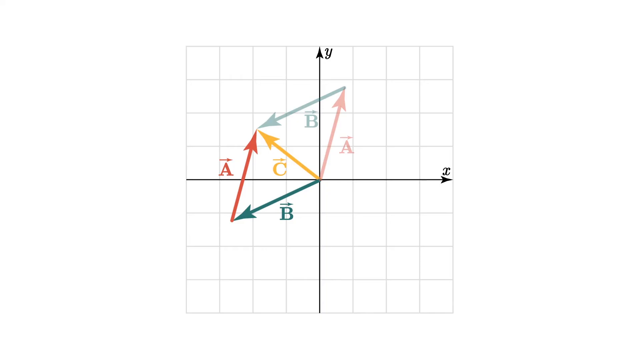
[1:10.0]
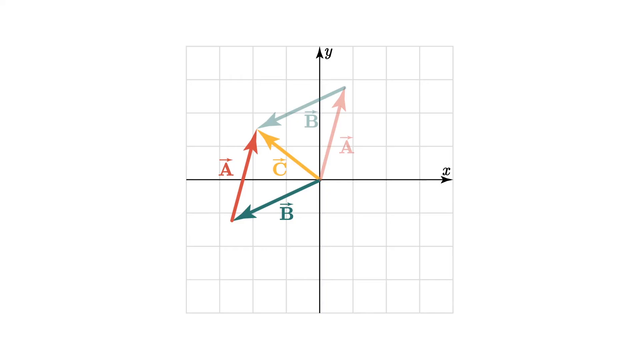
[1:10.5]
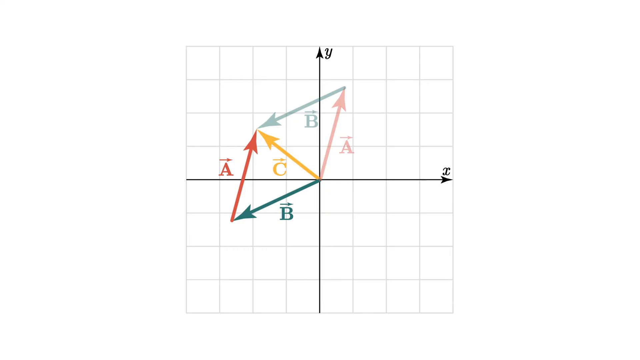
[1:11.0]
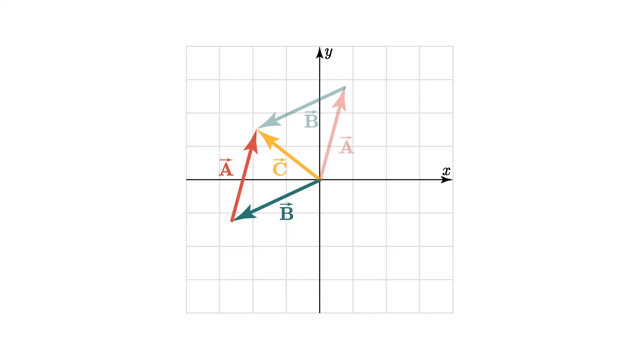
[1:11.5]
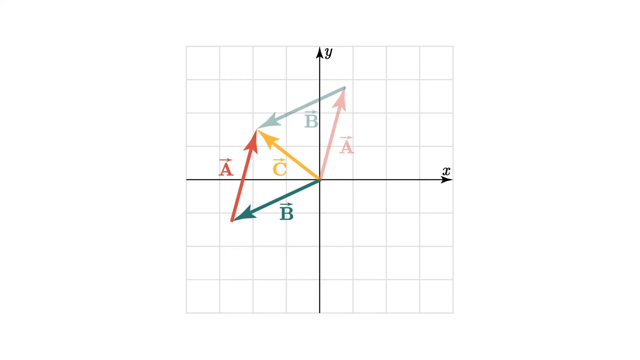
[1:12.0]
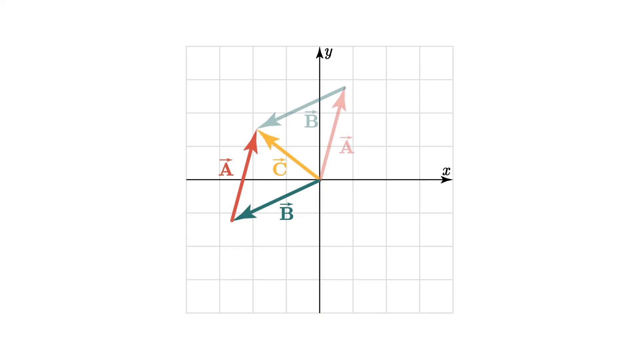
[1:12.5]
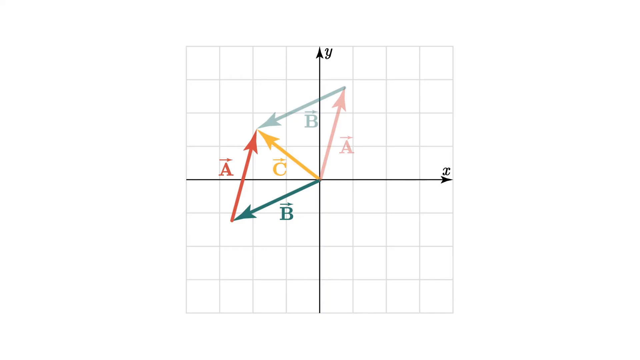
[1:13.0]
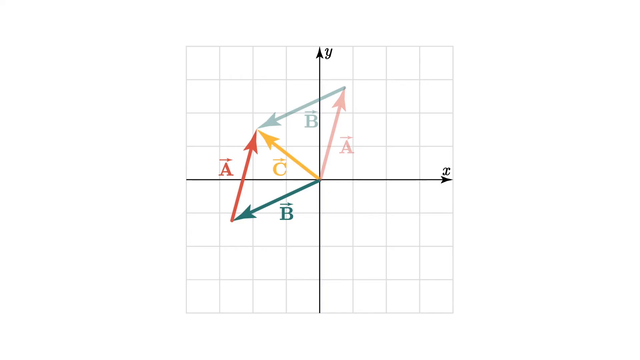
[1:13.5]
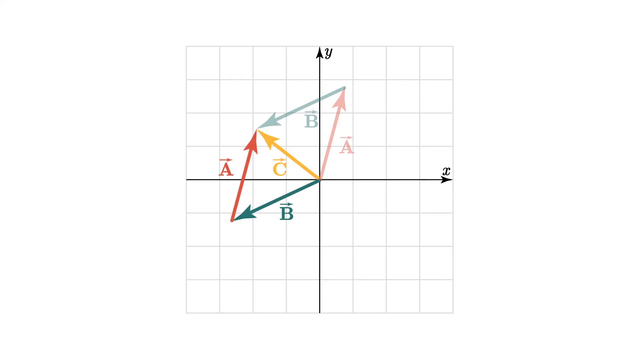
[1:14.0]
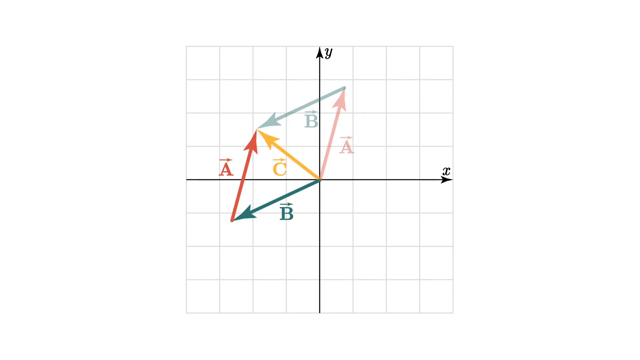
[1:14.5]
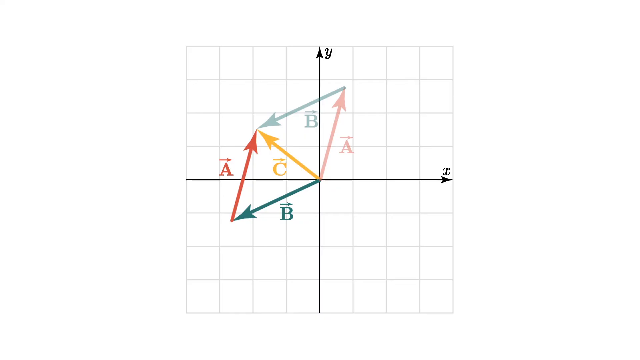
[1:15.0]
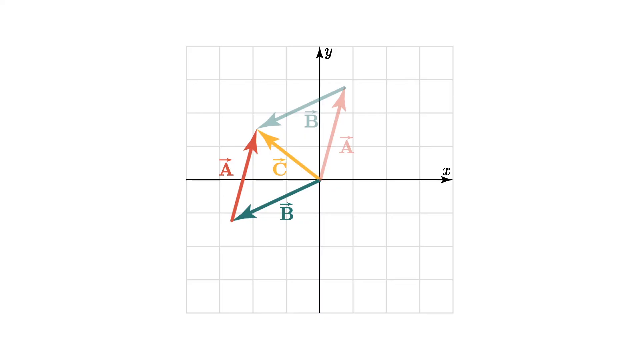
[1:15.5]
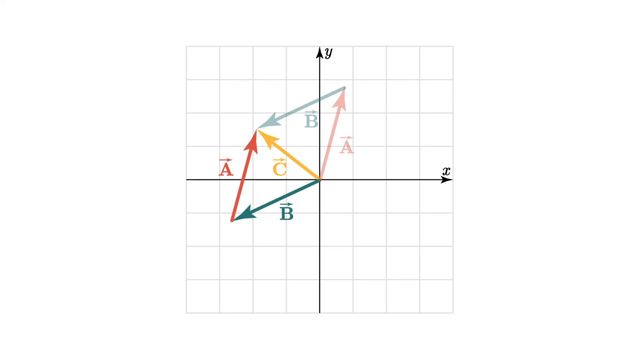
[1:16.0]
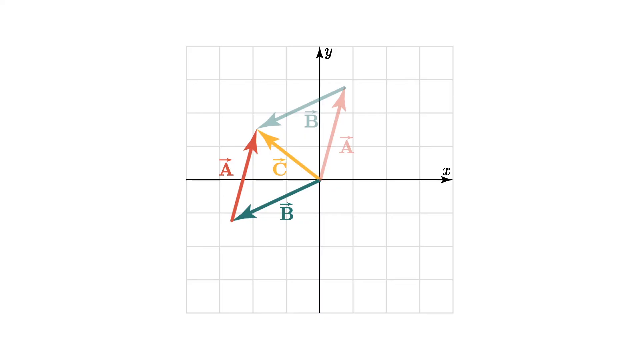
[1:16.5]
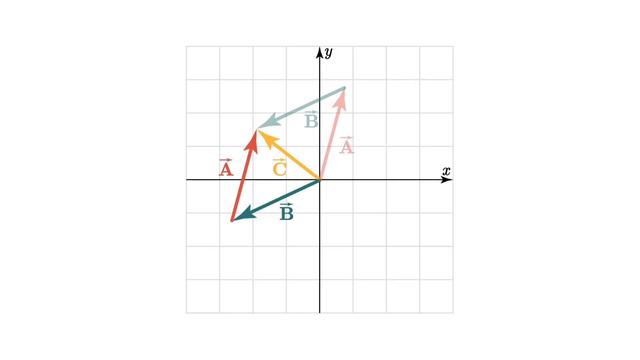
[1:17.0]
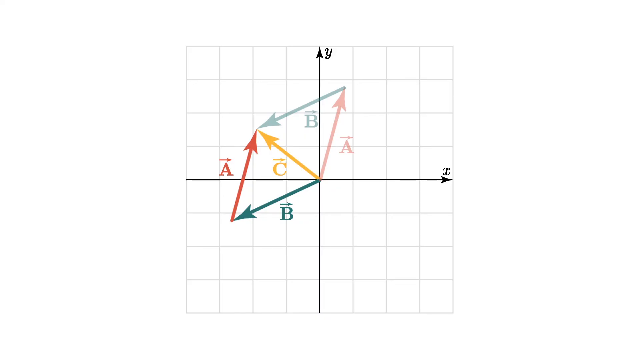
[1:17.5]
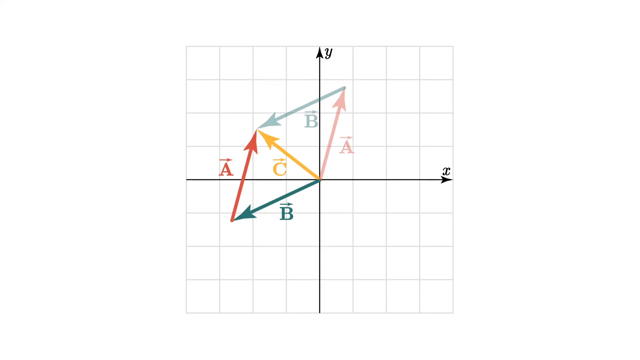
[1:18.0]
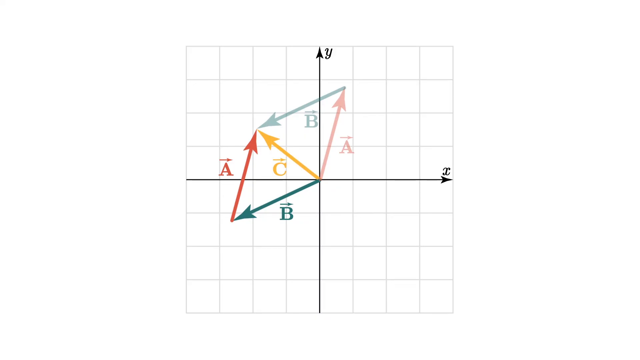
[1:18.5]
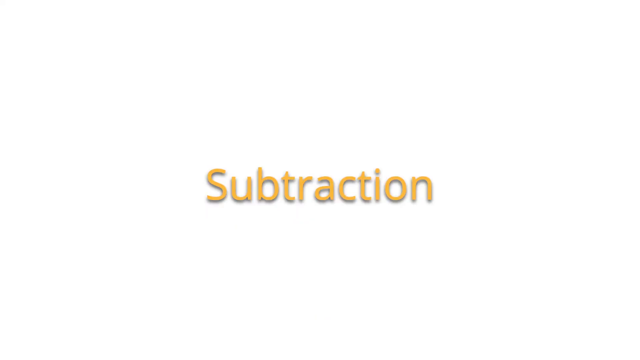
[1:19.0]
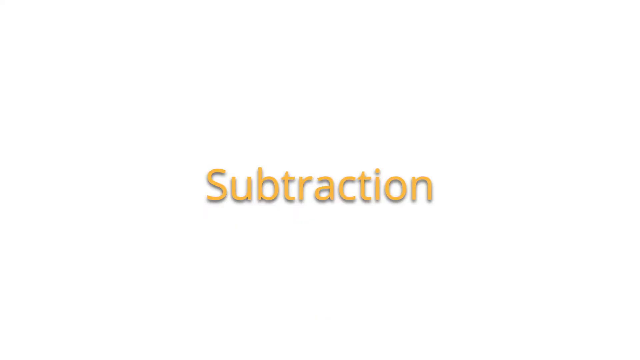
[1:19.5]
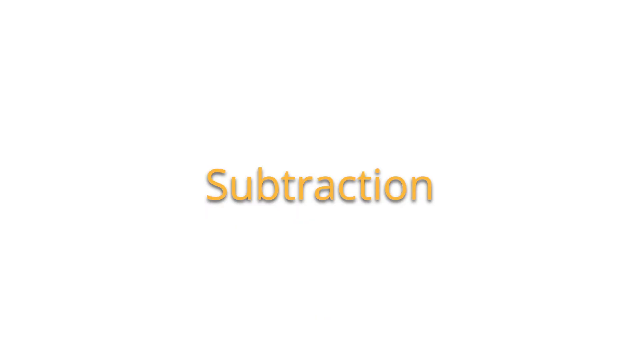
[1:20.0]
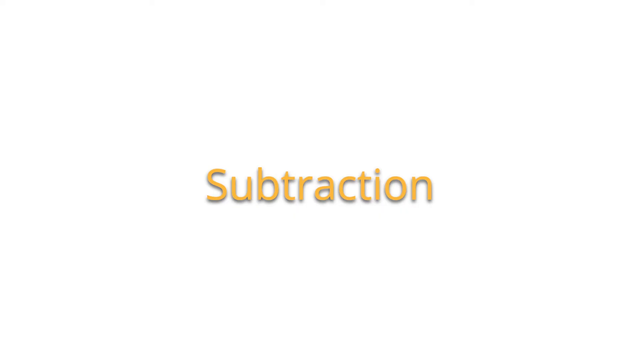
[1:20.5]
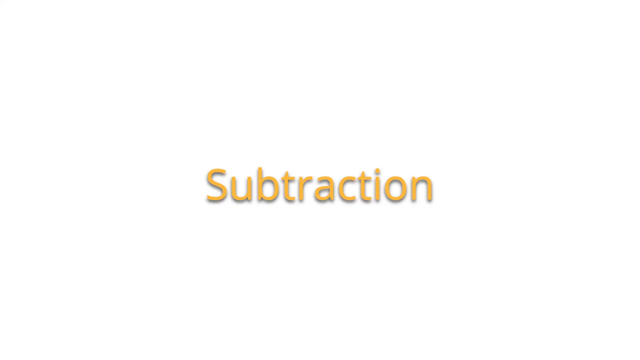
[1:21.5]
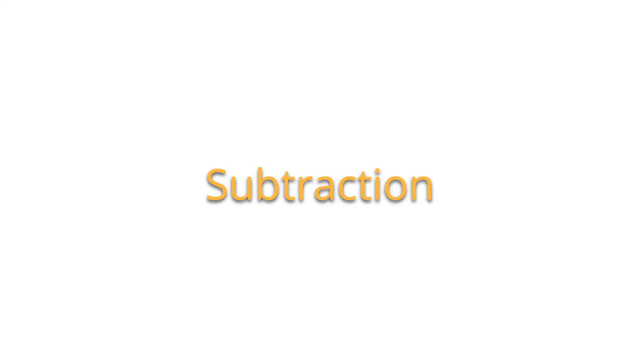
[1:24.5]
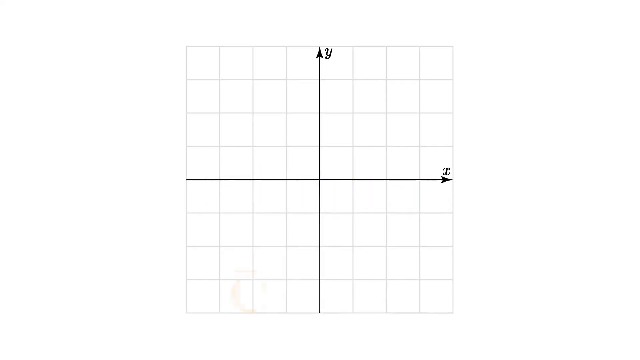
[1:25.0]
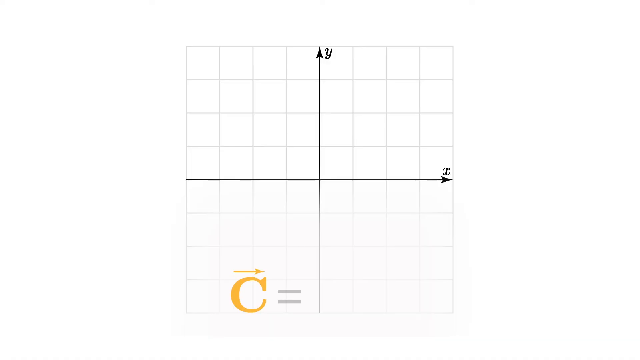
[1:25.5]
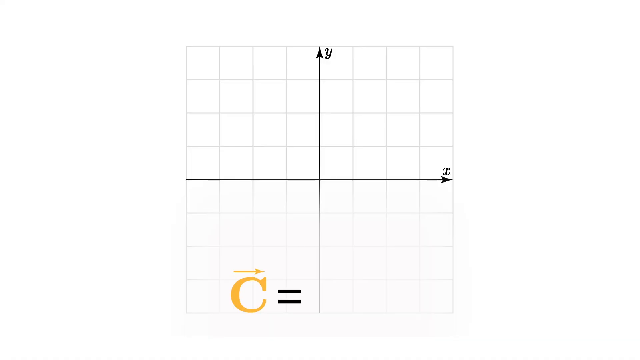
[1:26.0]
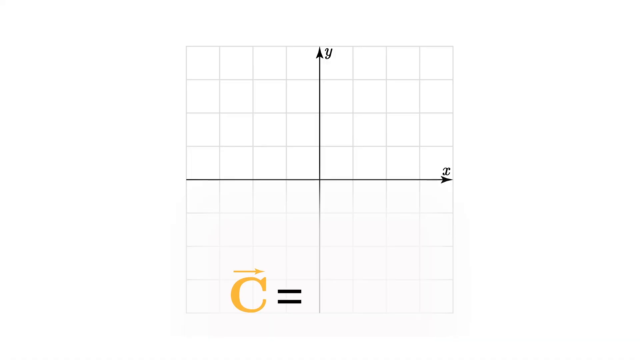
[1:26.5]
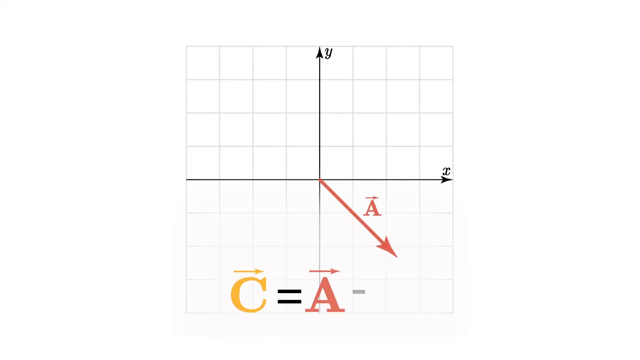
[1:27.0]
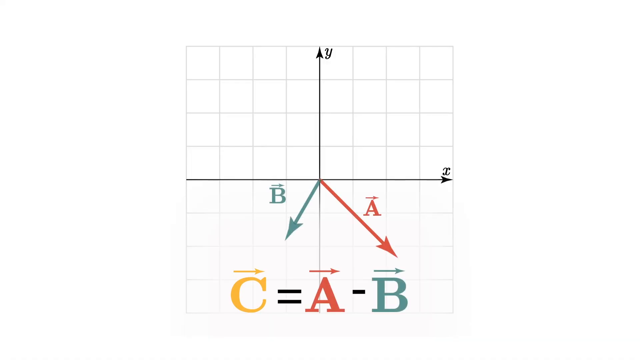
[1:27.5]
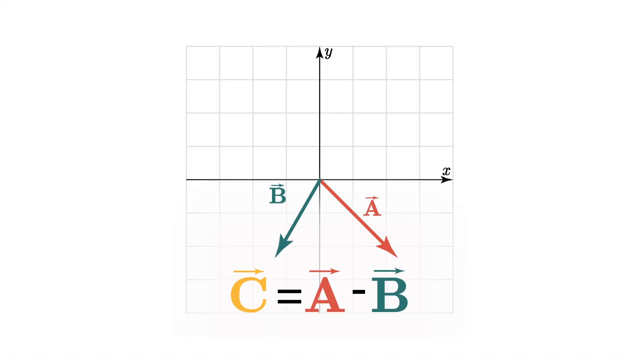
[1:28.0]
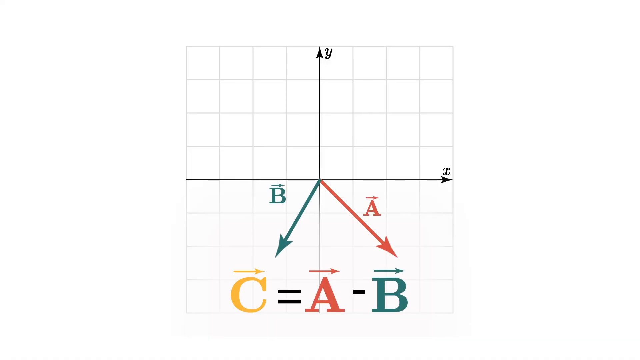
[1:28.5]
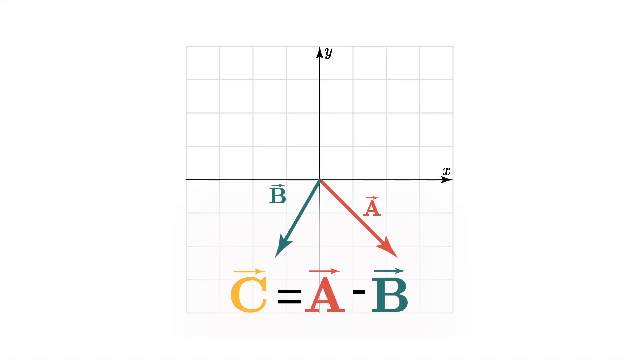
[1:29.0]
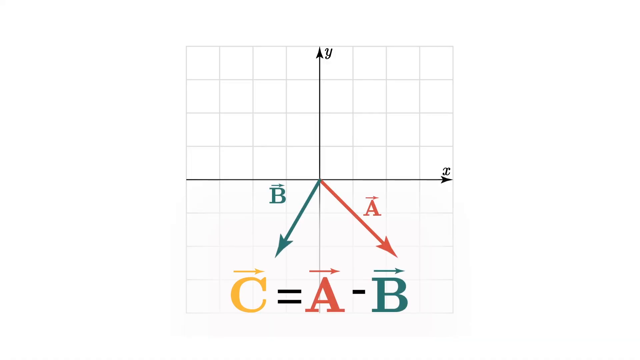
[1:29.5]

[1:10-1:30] This science video about vectors has graph paper in the middle, eight squares across and eight squares down, with an X and Y axis drawn in black. The arrows are now in different locations, with two A vectors. At the origin, a diagonal A line comes out of the first positive area between X and Y. A B arrow comes out of the negative X part and goes two and a half squares diagonally. From that point, an A arrow goes up diagonally to meet a C arrow that comes from the negative part of the X origin. A very faint second B goes from the original A toward the C. The C is a yellow color.